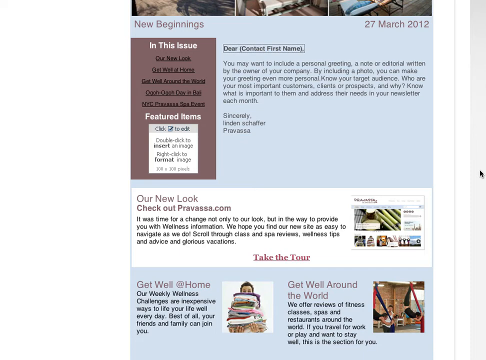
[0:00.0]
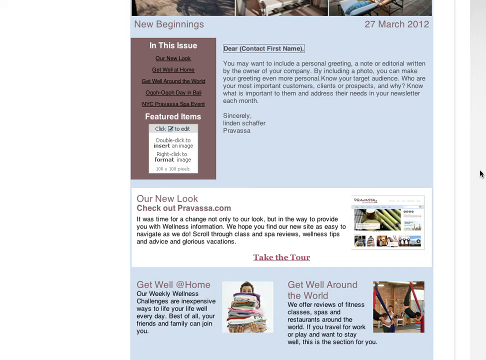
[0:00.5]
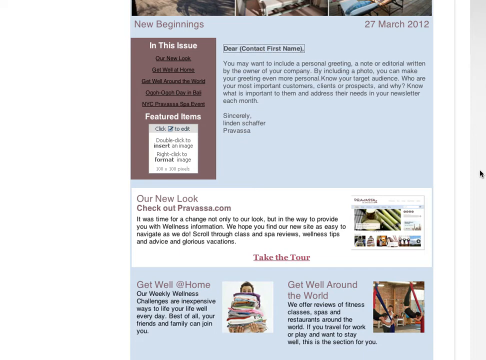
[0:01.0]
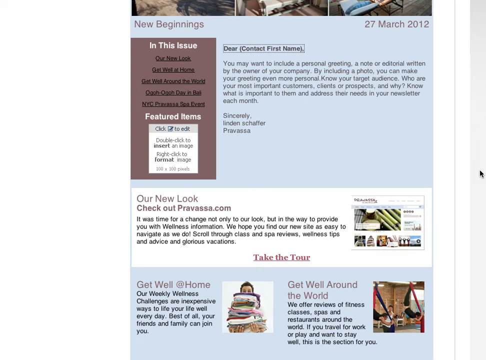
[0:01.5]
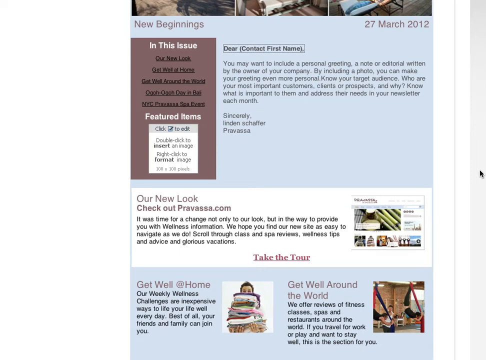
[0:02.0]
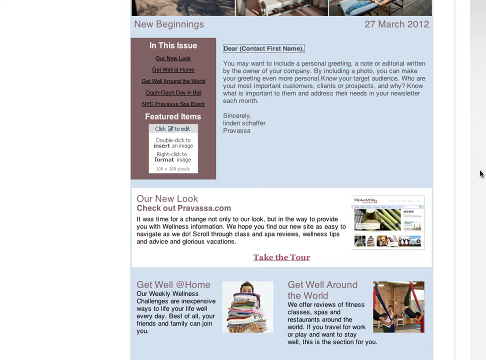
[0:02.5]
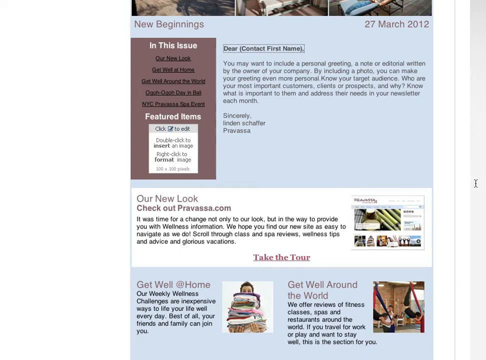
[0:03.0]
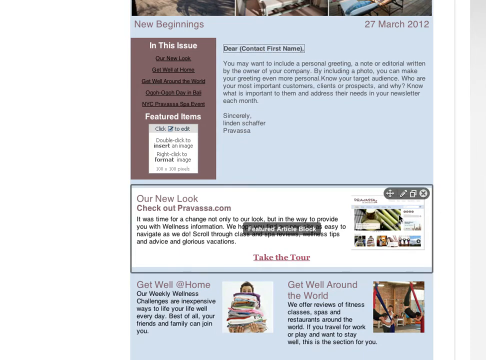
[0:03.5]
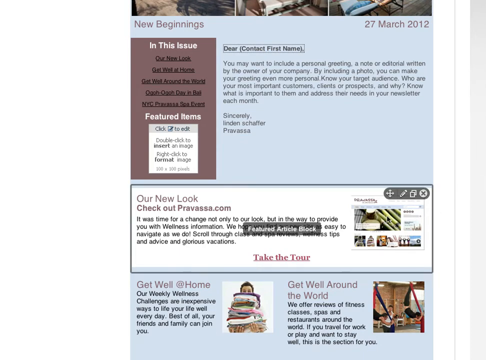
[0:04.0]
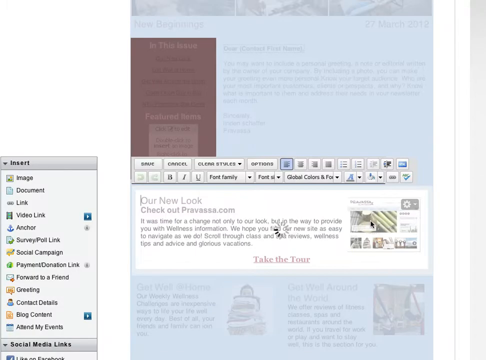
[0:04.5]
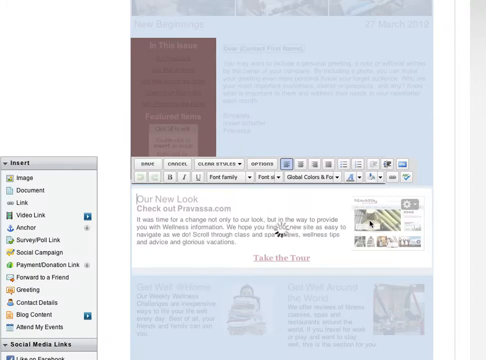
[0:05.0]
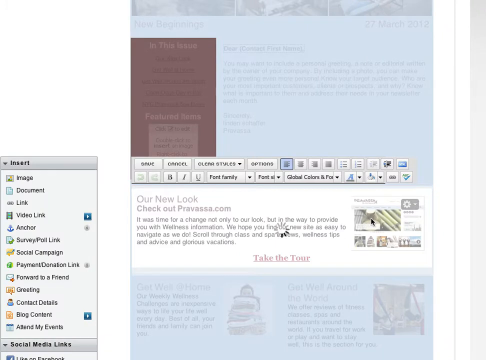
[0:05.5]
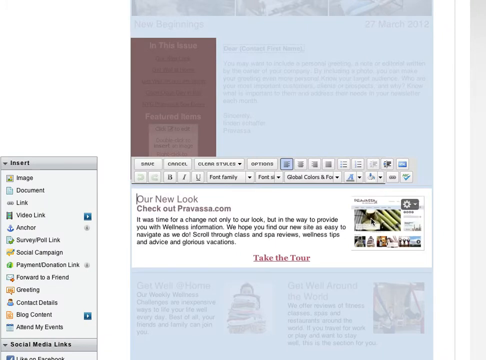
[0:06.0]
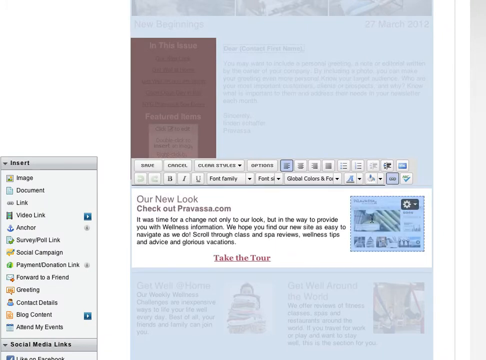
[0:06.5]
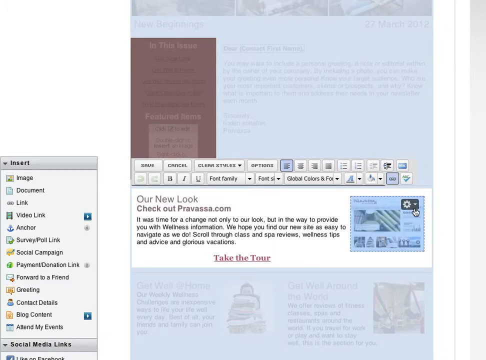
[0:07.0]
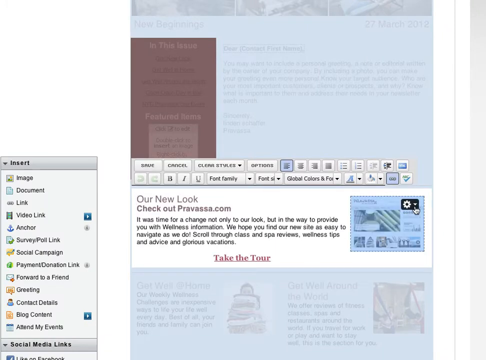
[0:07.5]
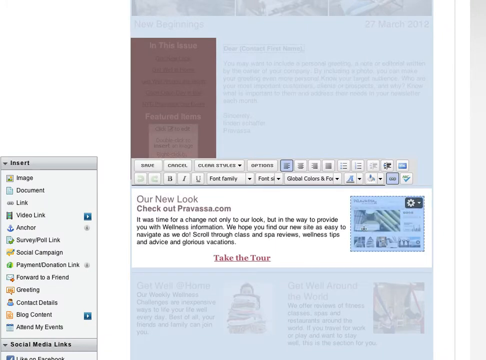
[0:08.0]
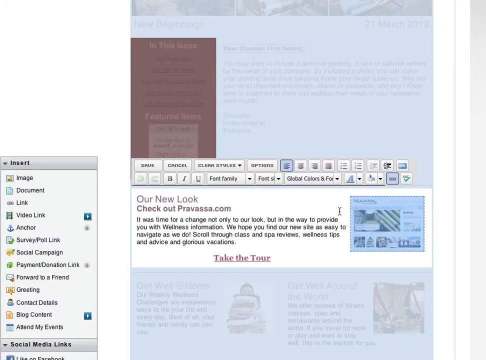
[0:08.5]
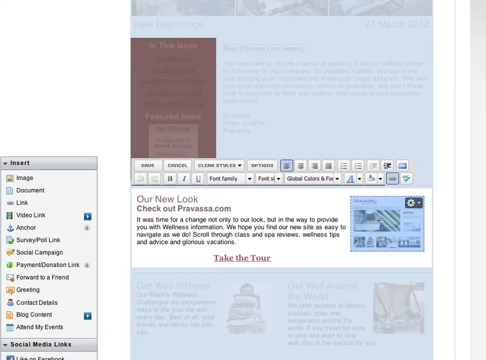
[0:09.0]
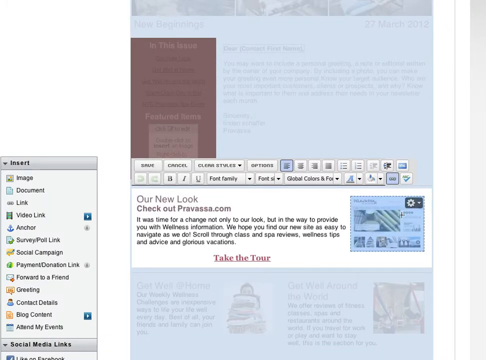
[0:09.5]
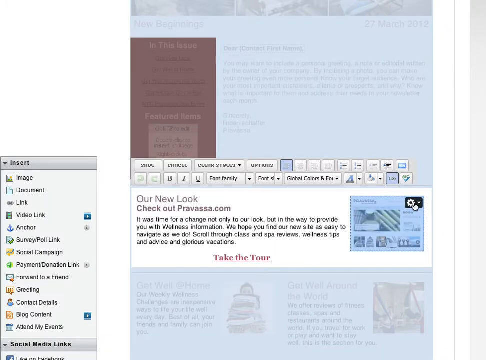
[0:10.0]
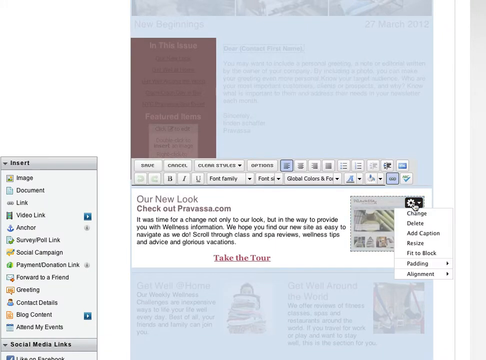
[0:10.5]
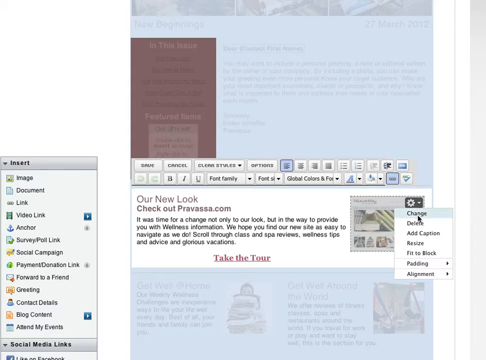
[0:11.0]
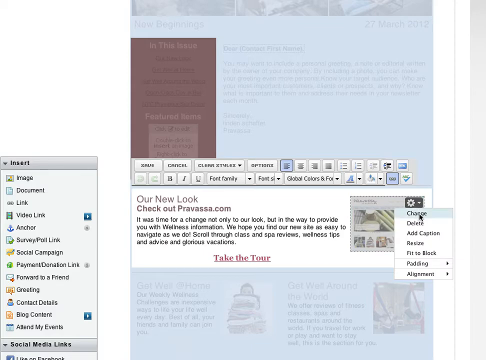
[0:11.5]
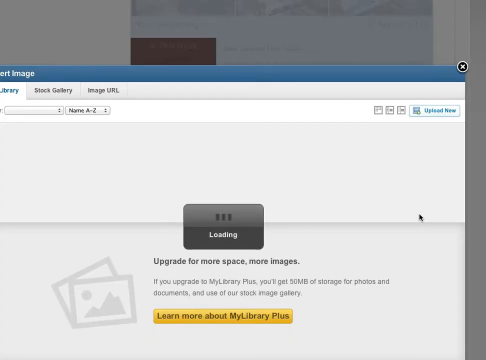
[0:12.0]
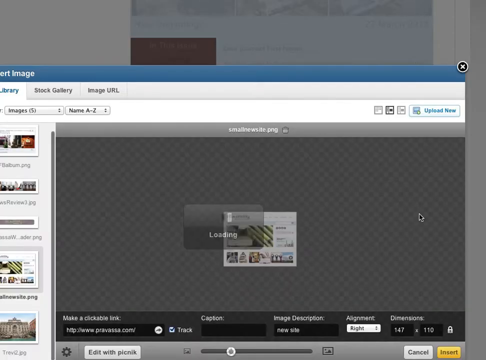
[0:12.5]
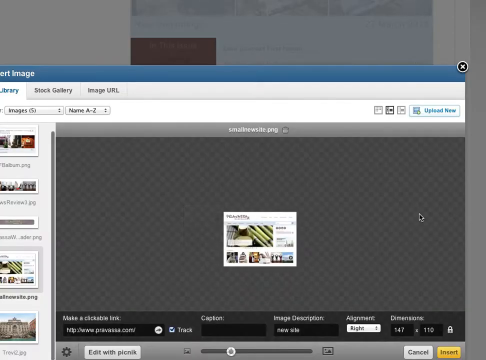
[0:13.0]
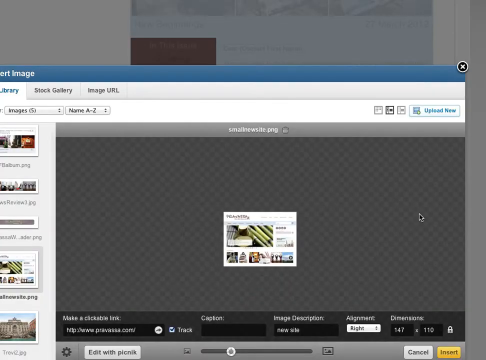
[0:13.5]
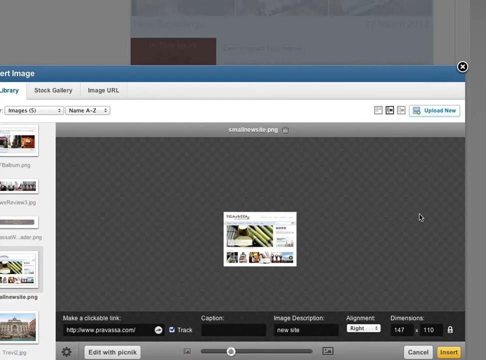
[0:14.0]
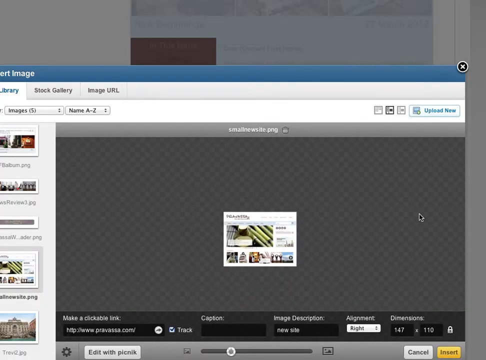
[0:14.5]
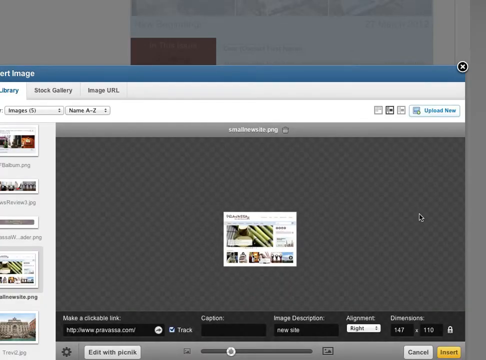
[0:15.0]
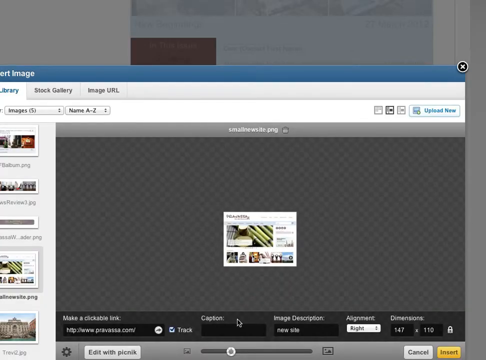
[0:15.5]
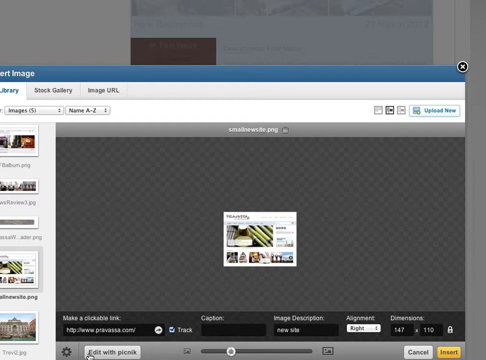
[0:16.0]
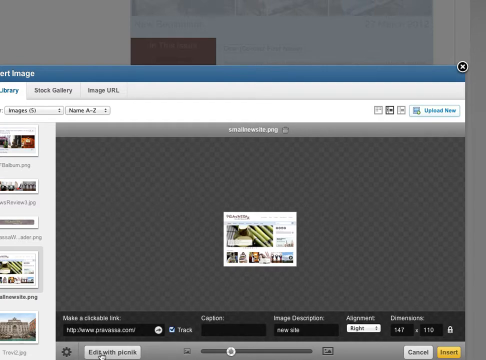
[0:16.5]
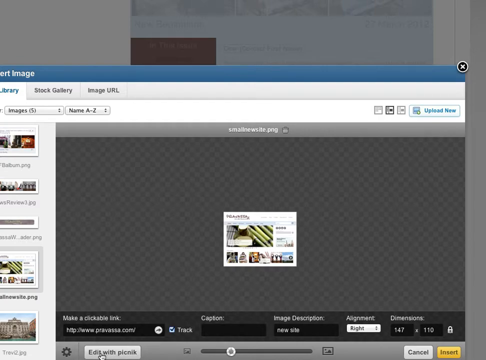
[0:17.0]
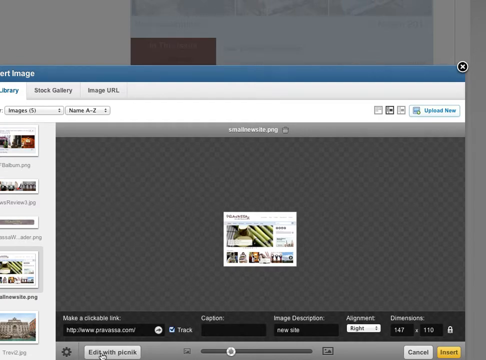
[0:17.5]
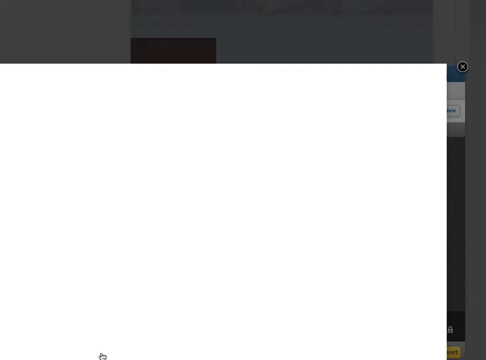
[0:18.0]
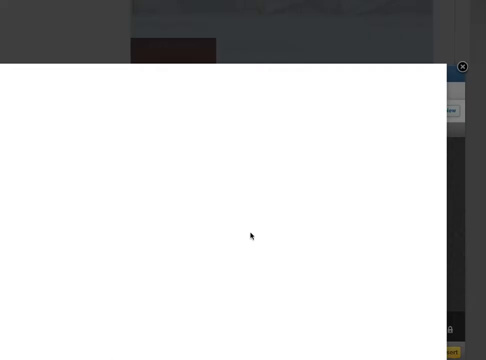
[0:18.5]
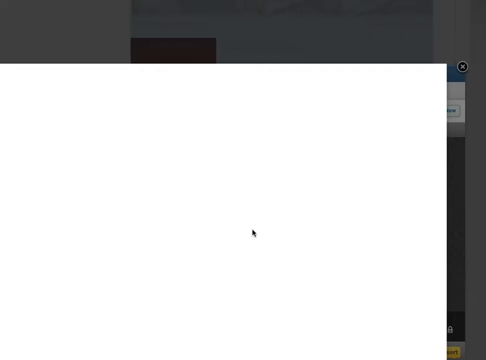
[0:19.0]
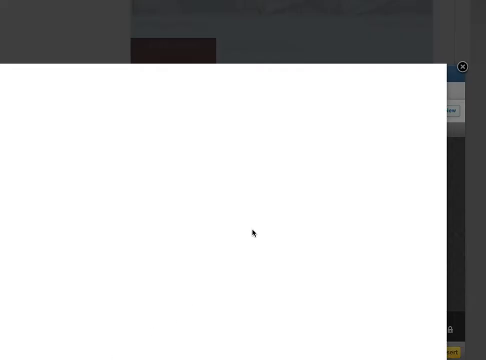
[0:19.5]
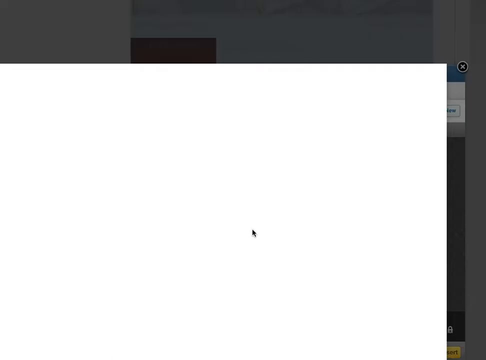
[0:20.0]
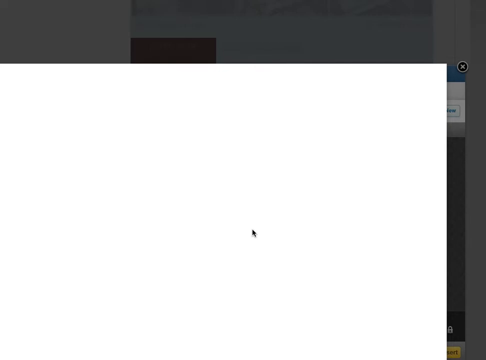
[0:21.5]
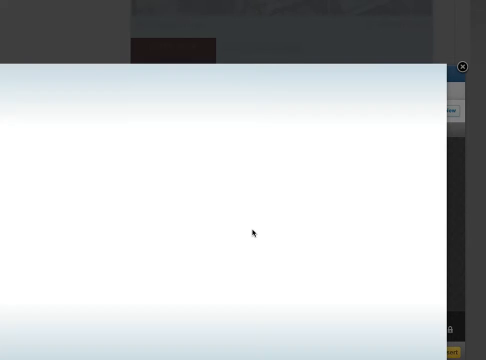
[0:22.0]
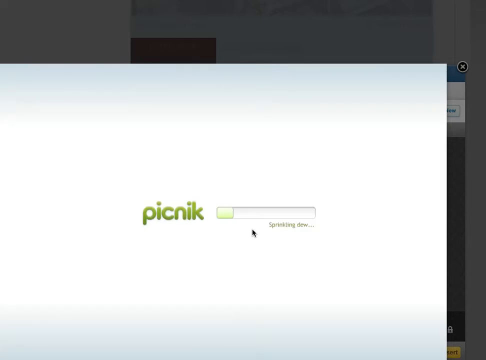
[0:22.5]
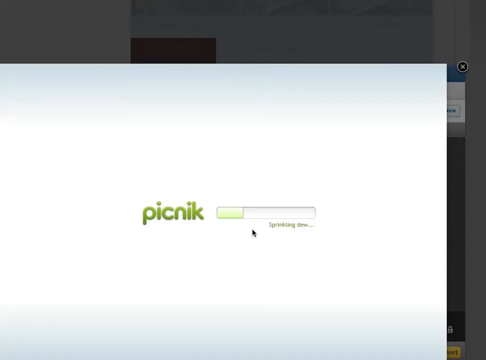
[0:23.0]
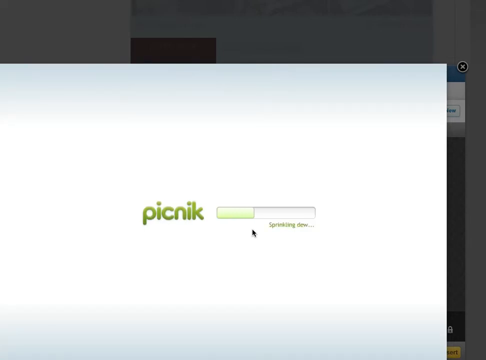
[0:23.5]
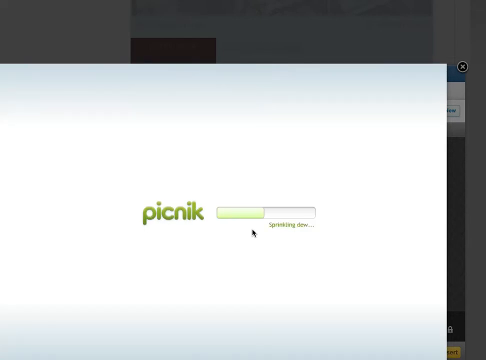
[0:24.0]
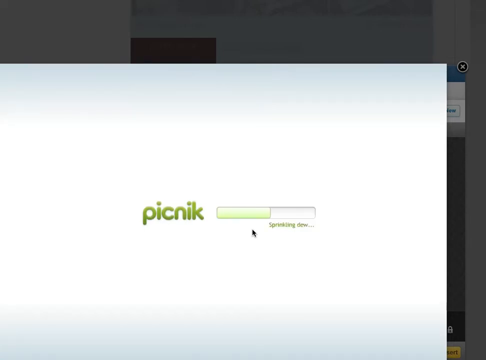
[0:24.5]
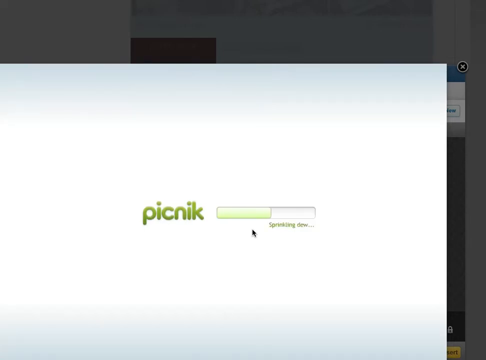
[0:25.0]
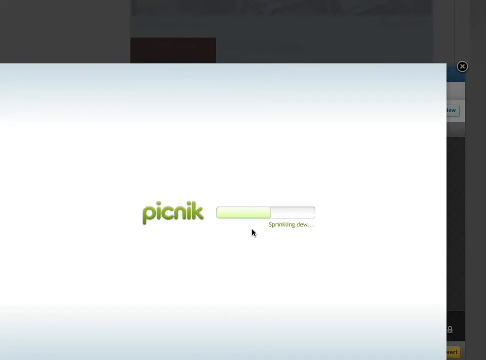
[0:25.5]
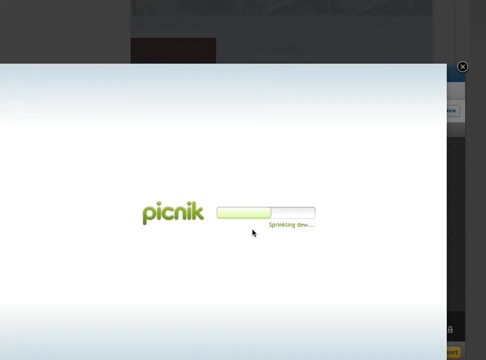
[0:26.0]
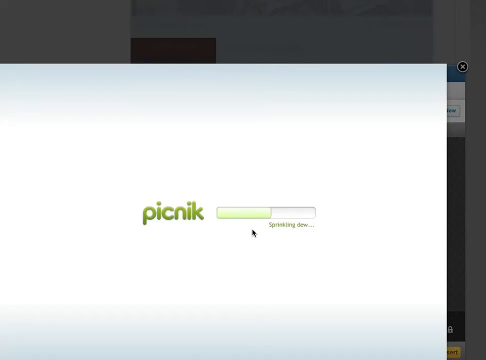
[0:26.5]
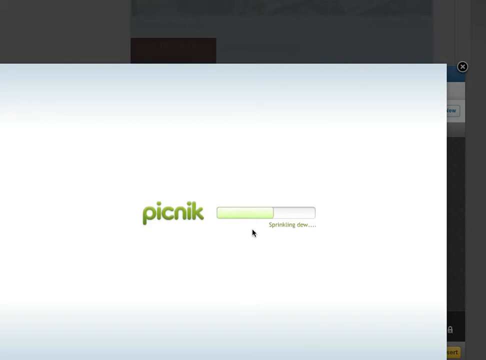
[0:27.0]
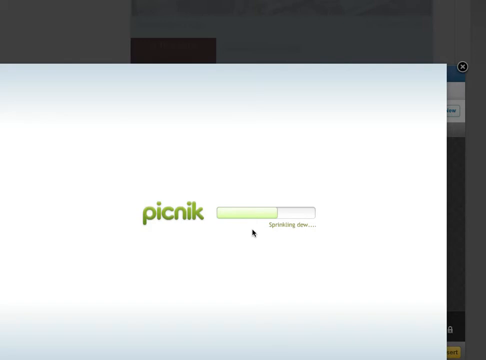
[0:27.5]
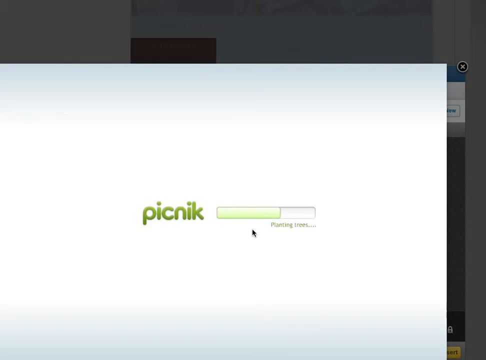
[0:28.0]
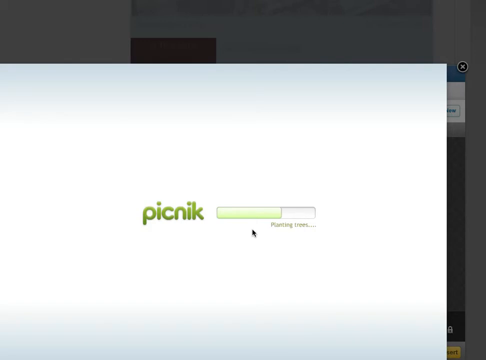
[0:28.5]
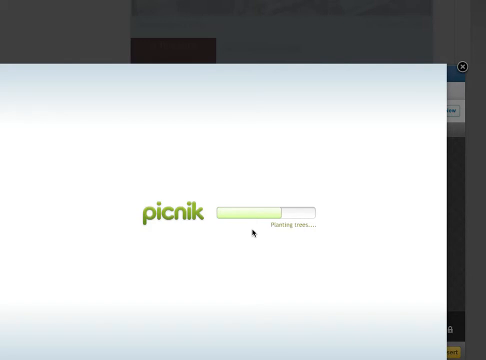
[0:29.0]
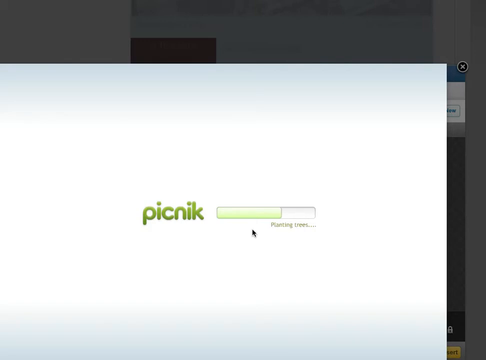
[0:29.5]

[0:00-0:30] A vertical page with information is displayed on a computer, and the screen flashes as it changes from one scene to another. An arrow clicks quickly on multiple boxes and screens. The page mentions "contract first name" and March 27, 2012, and is titled "new beginnings in this issue". It guides through the setting and has a hyperlink to take a tour. On the left side of the box is an inserted vertical box with many icons: image, document, link, video link, anchor, survey, poll, link, social, payment, donation, link, forward to a friend, greeting, and contact details. On the right side is a small black box with a gear in it. A hand pointer clicks on it, which moves it to the right side, and then clicks the word "change" in the drop-down menu. An image screen called the library appears, with three small tabs at the top: "library", "stock library" and "image URL".